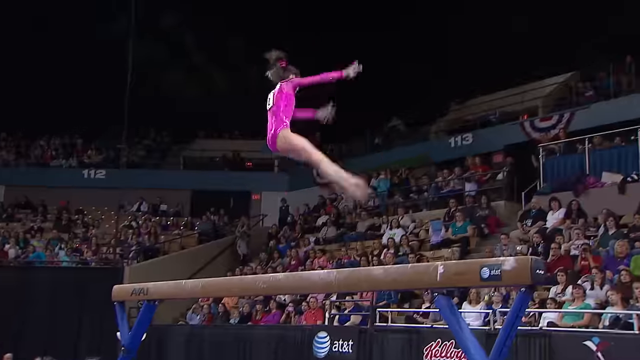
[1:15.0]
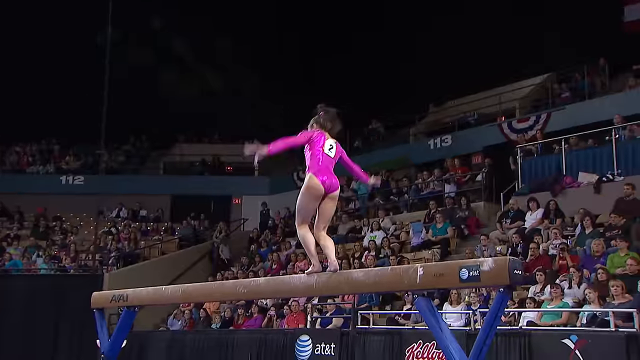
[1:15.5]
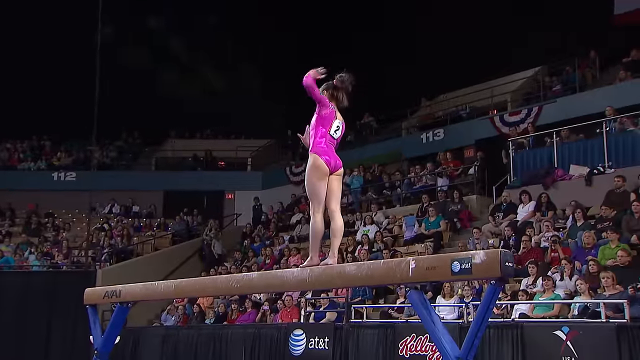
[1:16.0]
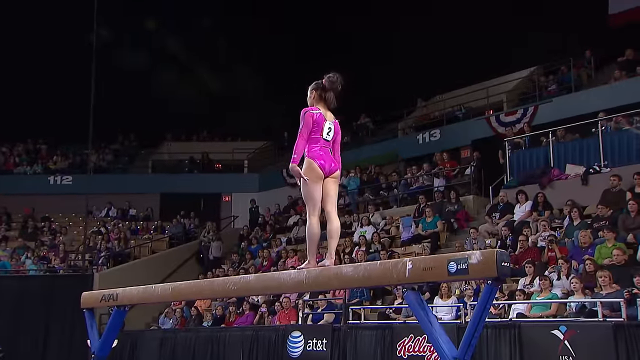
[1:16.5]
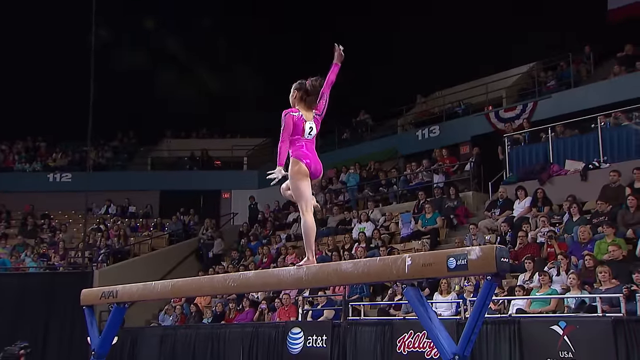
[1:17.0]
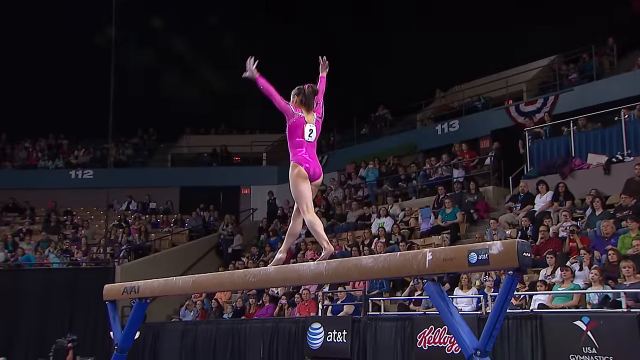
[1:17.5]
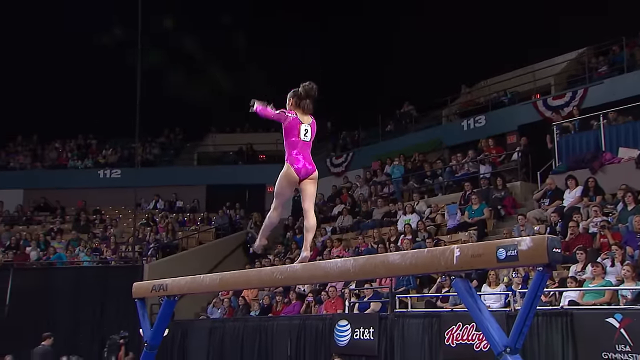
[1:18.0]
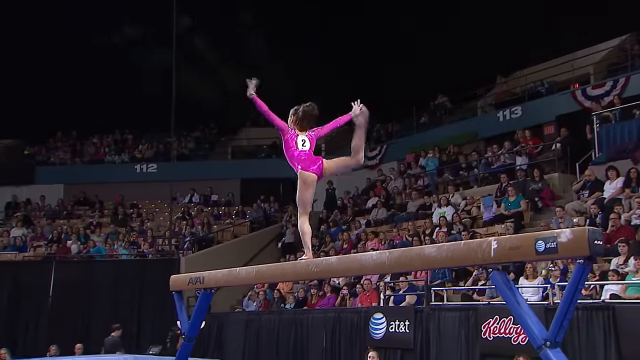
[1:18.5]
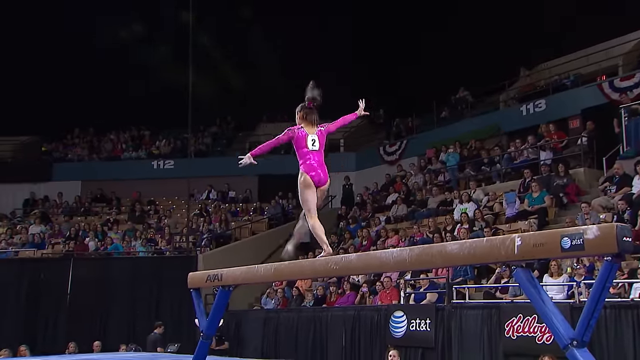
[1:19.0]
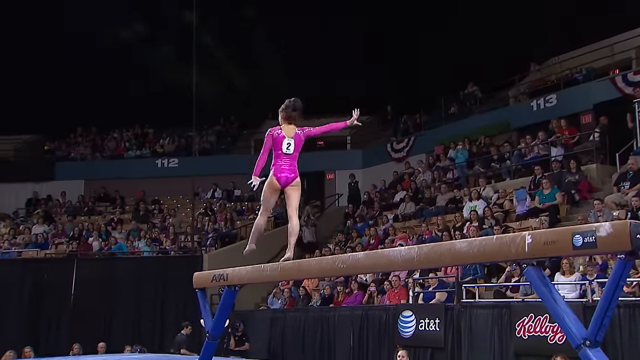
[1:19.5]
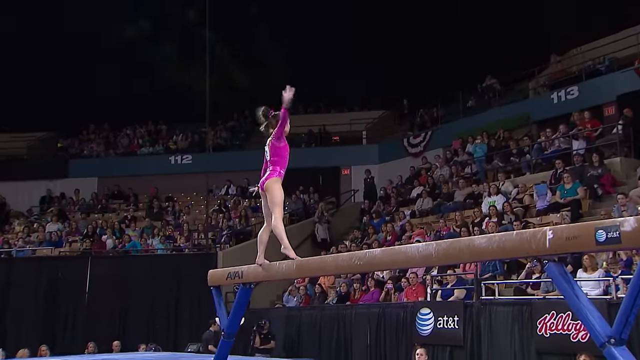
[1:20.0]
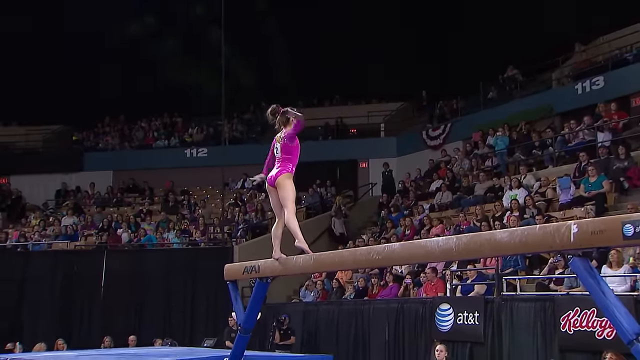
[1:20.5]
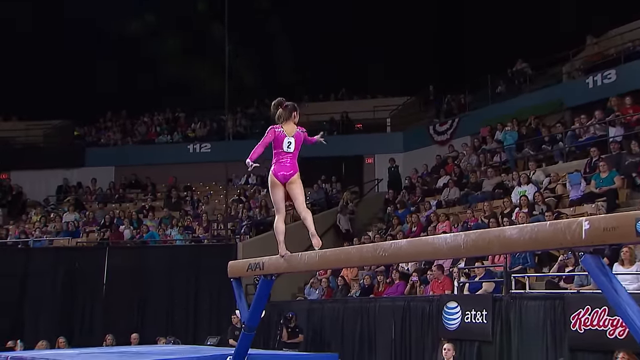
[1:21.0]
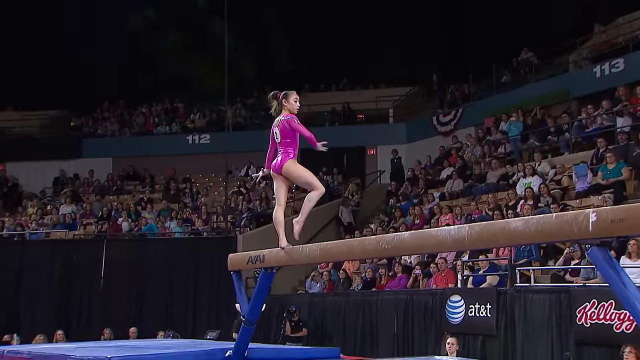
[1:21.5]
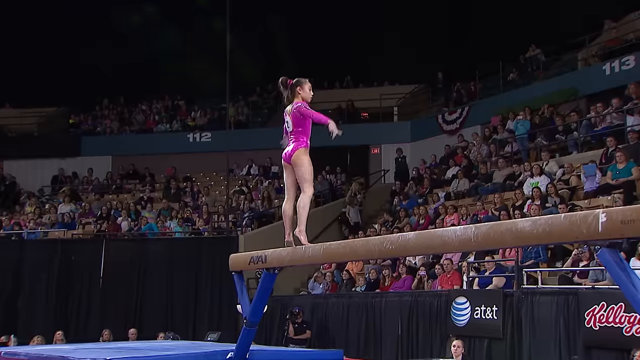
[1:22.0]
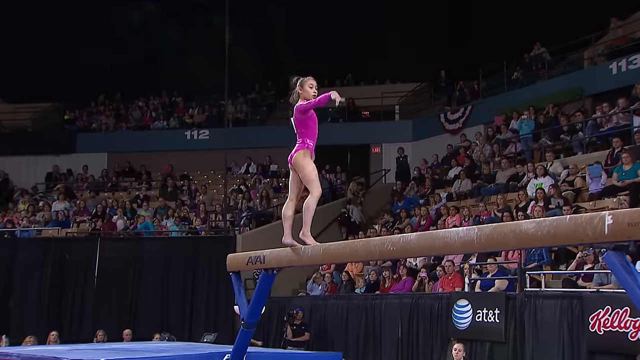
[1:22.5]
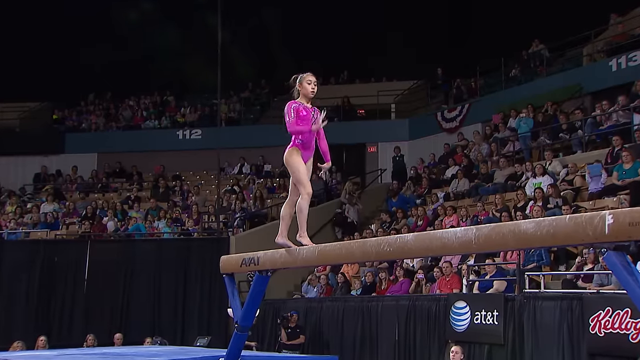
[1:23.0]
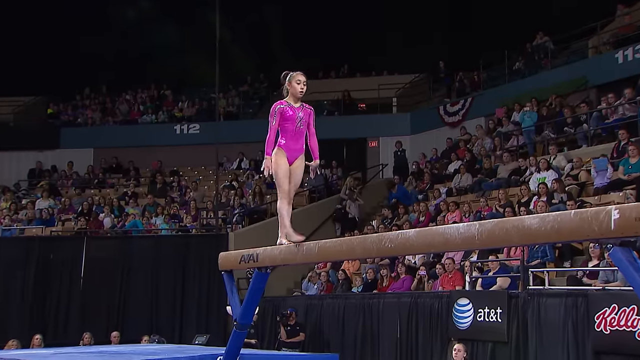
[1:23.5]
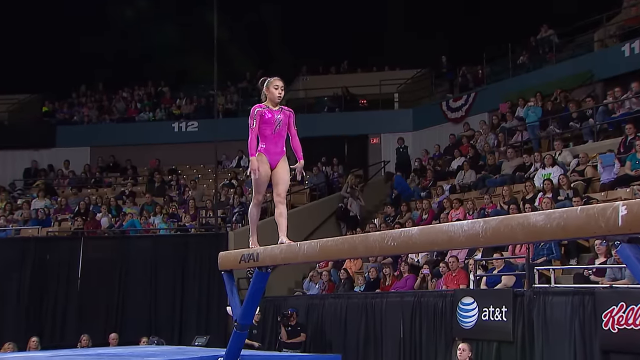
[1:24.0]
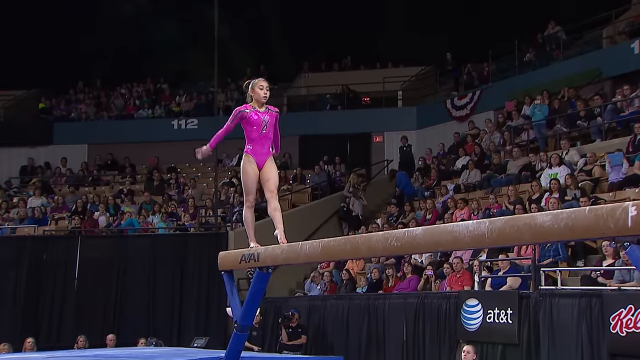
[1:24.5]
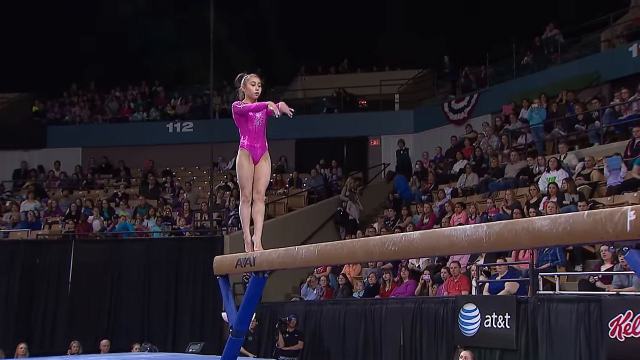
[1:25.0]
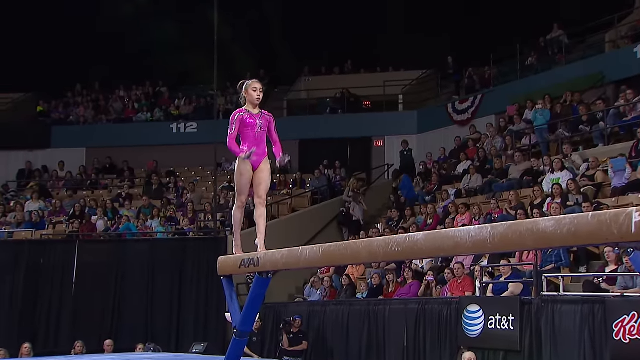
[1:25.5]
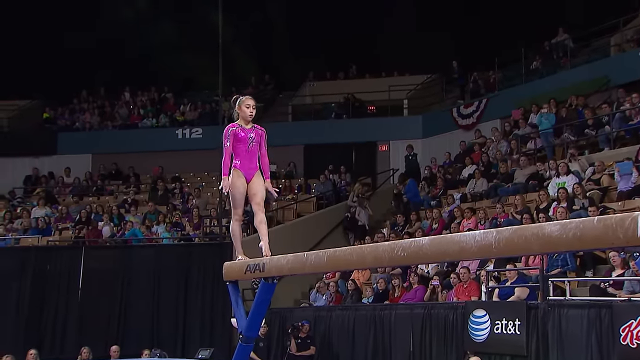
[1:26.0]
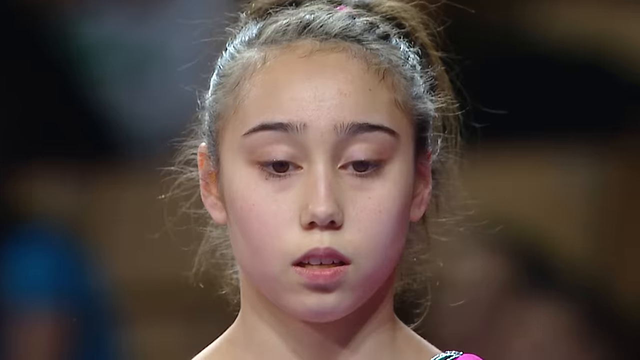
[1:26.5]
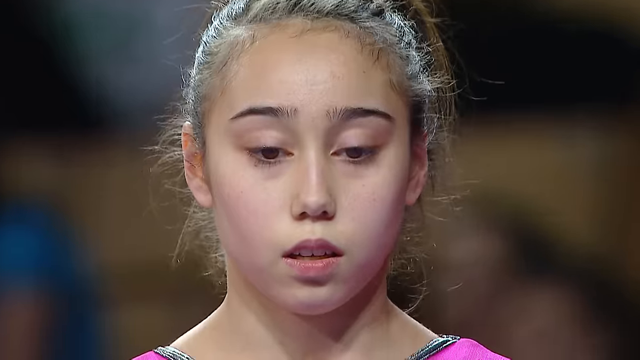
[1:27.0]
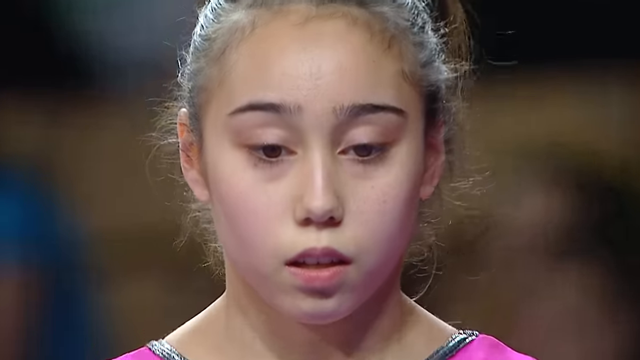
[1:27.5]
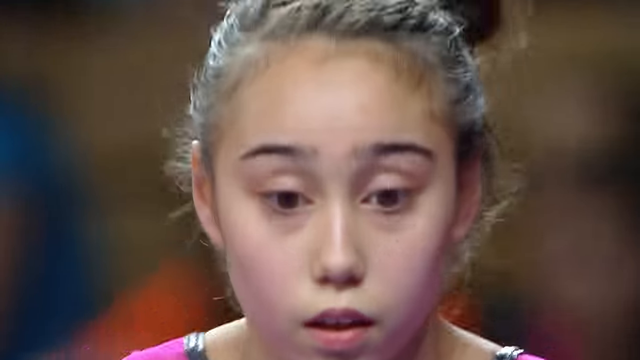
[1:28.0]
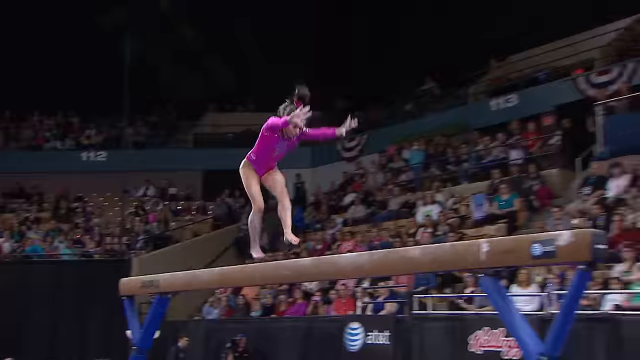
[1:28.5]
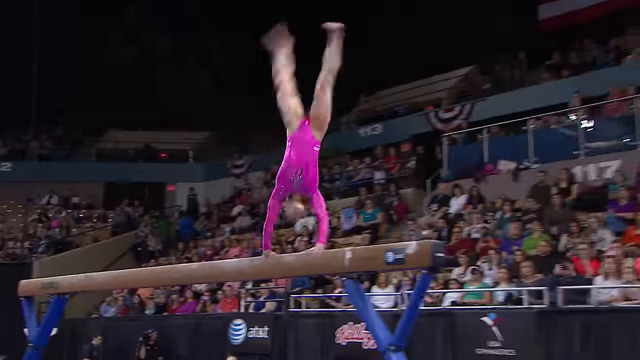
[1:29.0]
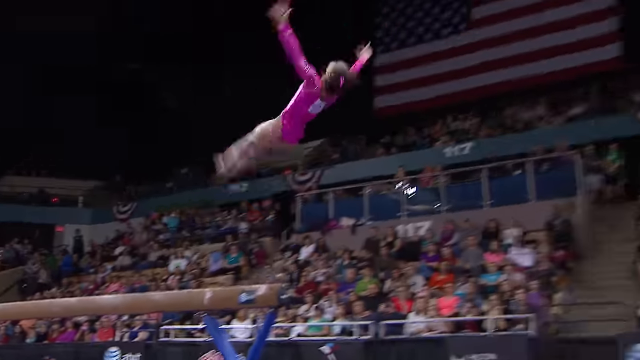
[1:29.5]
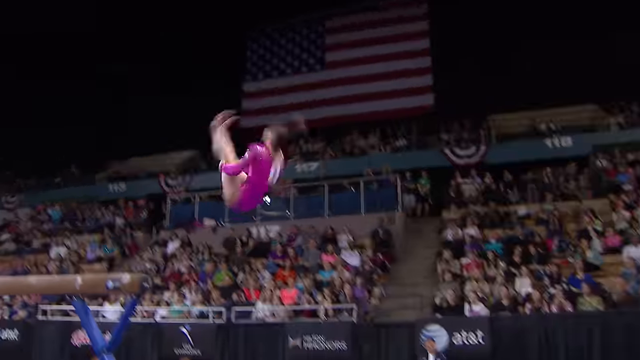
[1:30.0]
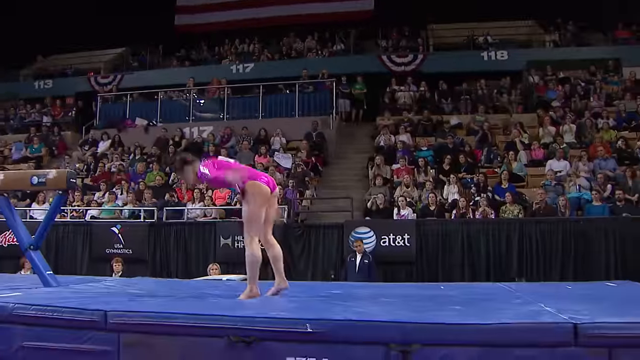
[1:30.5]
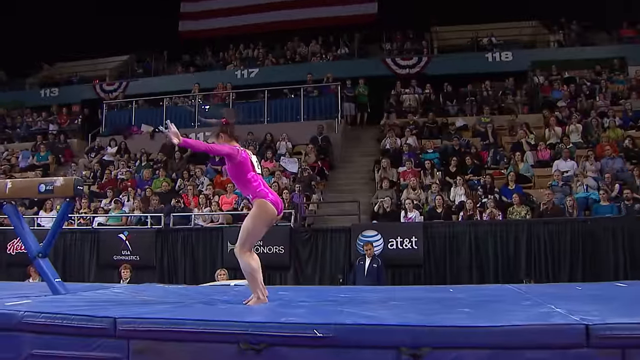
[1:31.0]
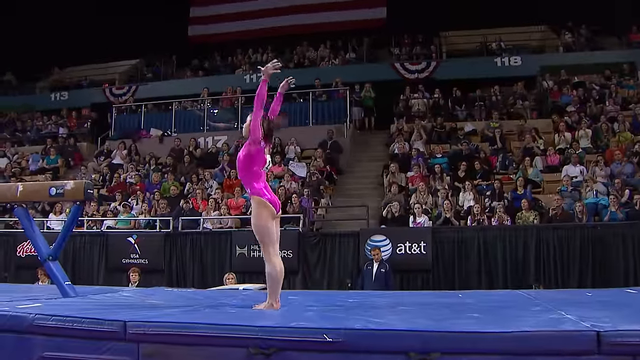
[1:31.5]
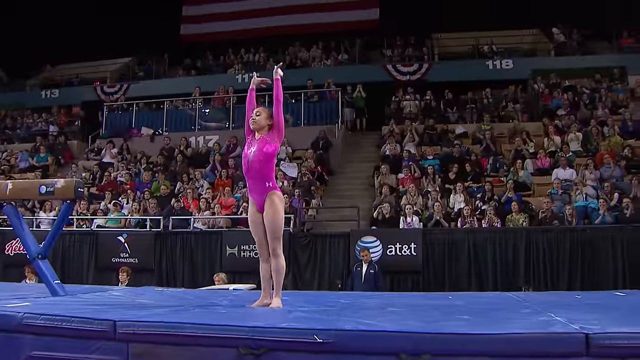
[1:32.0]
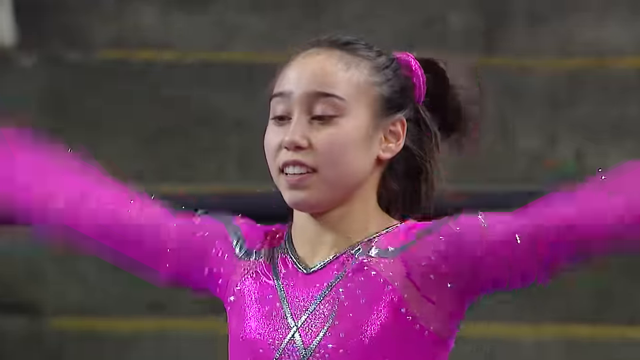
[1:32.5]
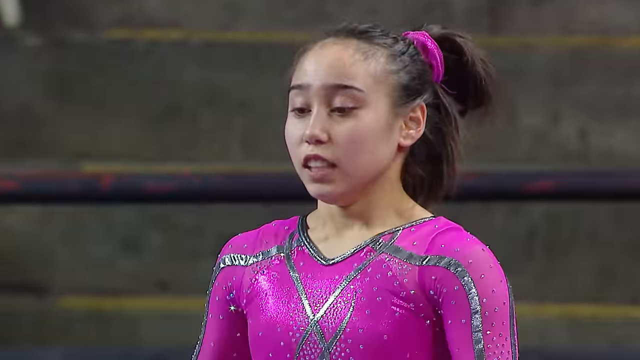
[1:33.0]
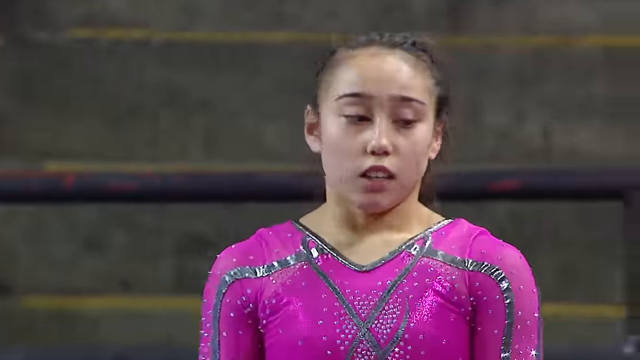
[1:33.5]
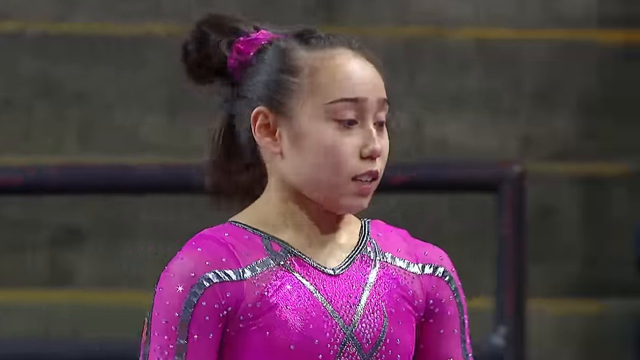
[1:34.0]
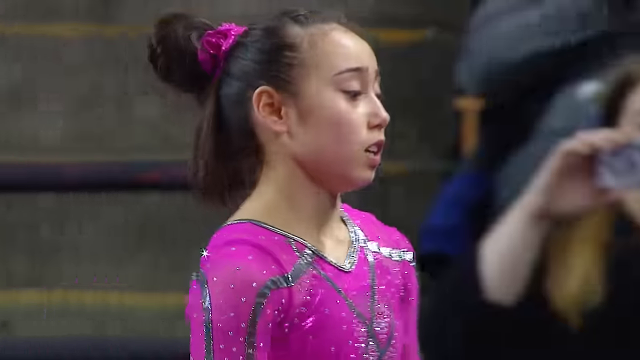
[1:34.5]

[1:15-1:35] The girl jumps in the air and lands in a kind of pose, one hand out front and hands to the side. She kind of waves her arms forward and does a flip. She flips, jumps off the beam, and lands on the mat with her hands in the air, one arm up and one leg back, twisting around. With one hand forward she kind of waves; her hair is strandy. She lands and she says hello. She has what appears to be a purple-pink band around her hair. She dances and flips, sticks the landing with her hands in the air, kind of looking down and forward, then jumps around and twists, one arm down and the other hand to the side. She does a kind of dance in which she twists and turns. She has thin eyebrows and thick gymnast legs, and she is barefoot, tiptoeing on the beam.